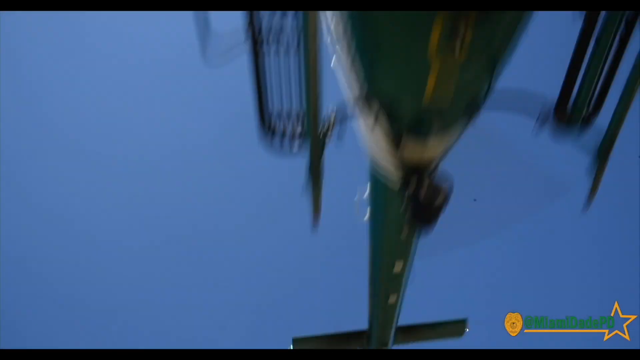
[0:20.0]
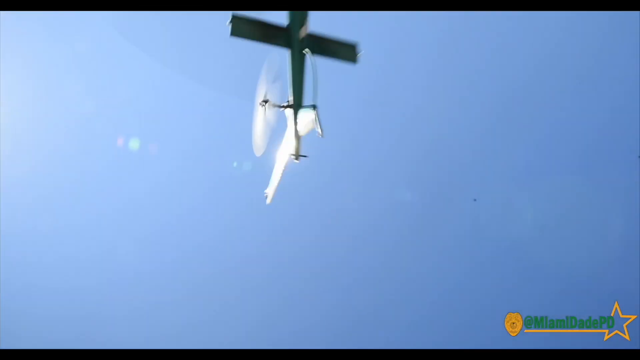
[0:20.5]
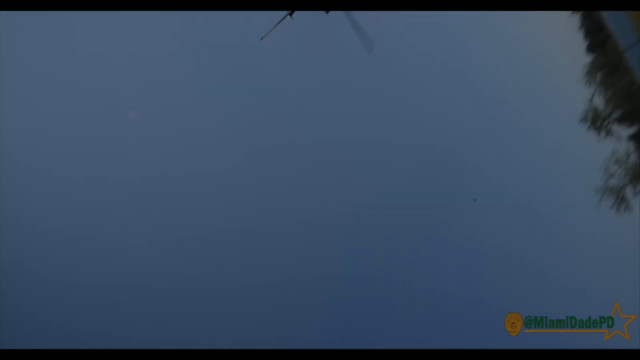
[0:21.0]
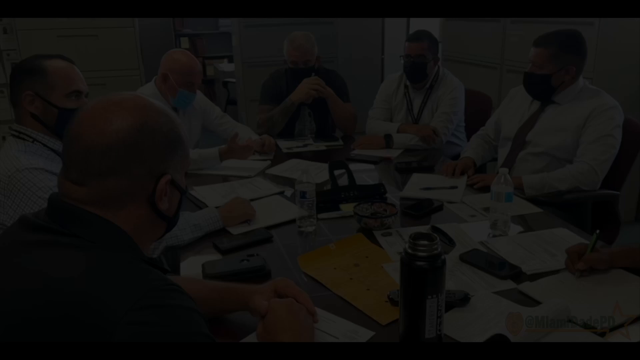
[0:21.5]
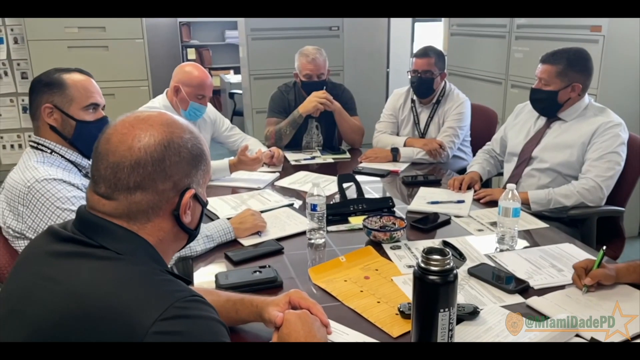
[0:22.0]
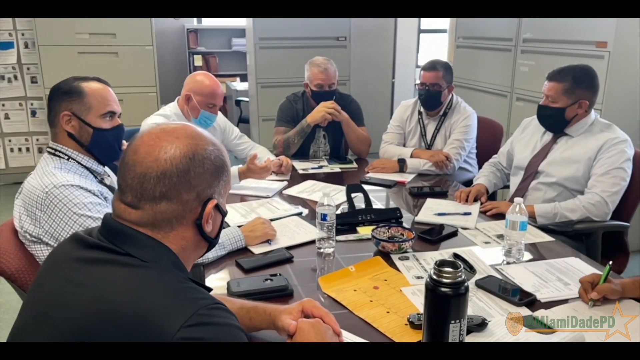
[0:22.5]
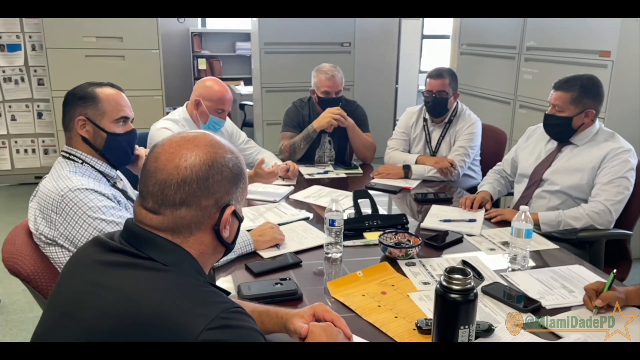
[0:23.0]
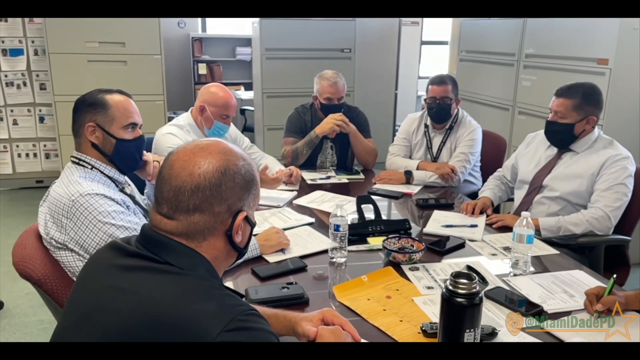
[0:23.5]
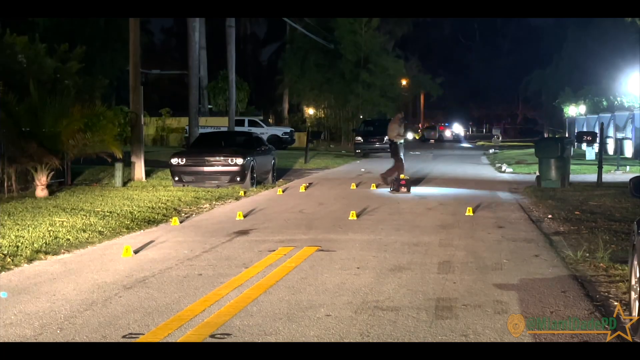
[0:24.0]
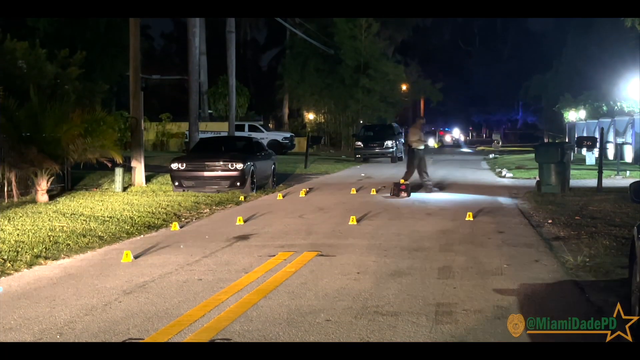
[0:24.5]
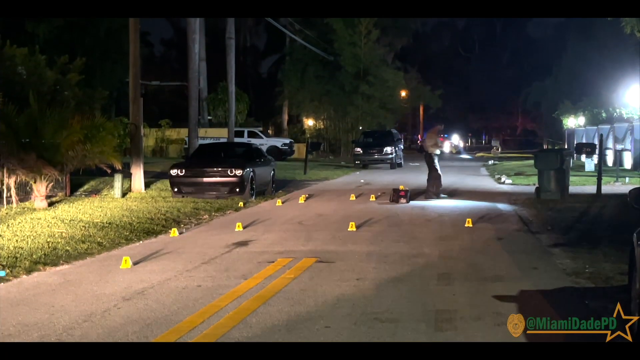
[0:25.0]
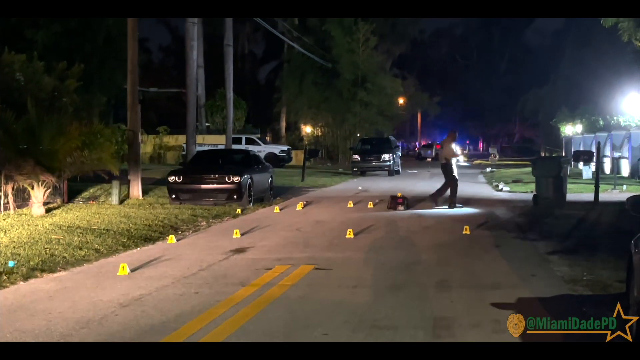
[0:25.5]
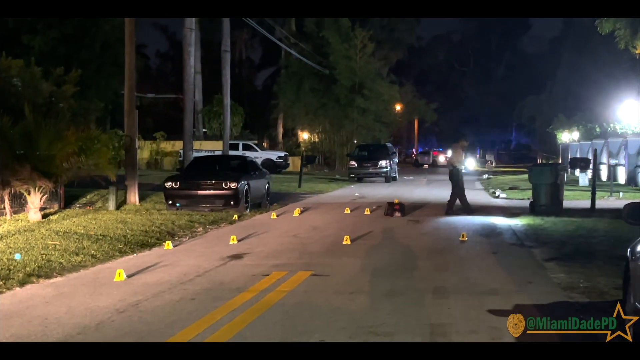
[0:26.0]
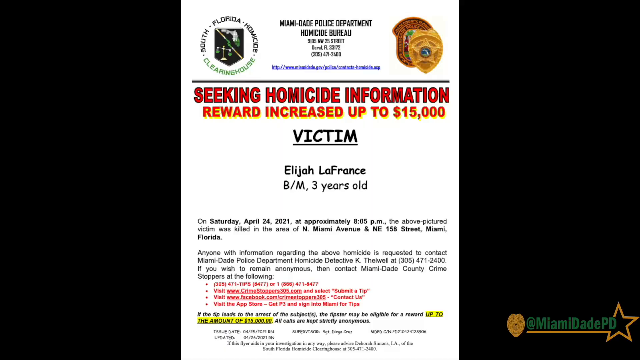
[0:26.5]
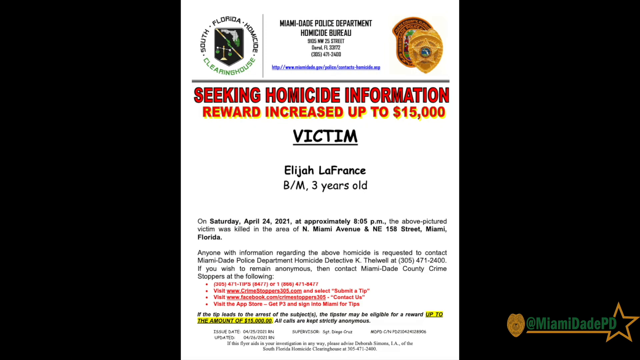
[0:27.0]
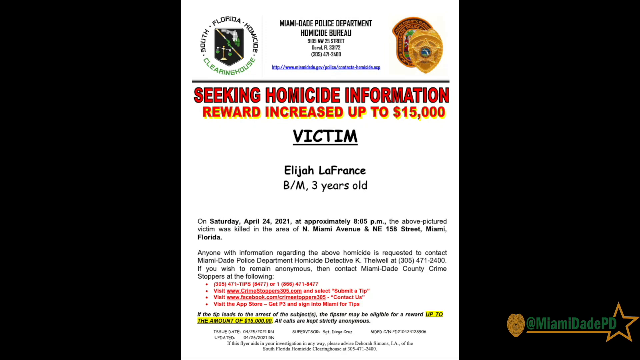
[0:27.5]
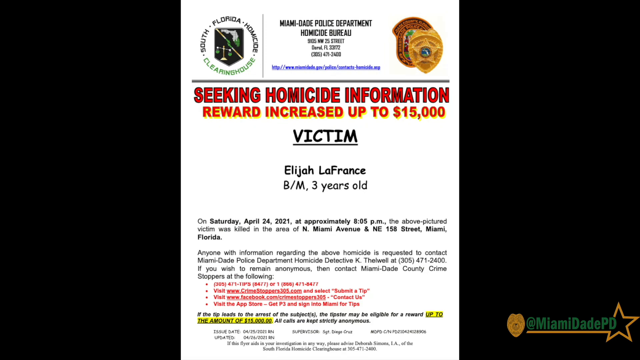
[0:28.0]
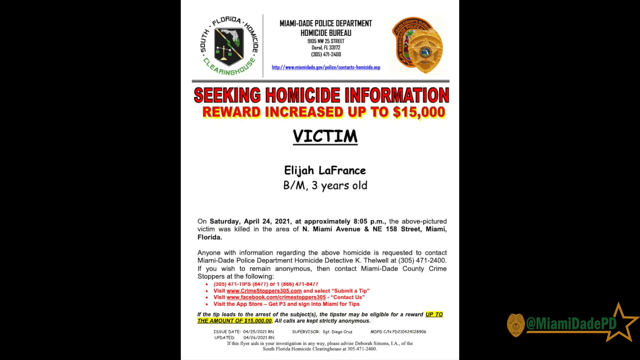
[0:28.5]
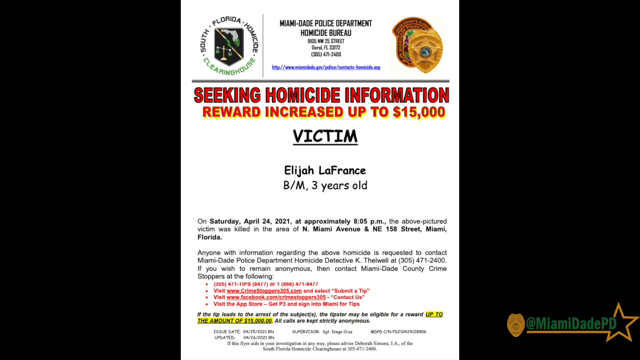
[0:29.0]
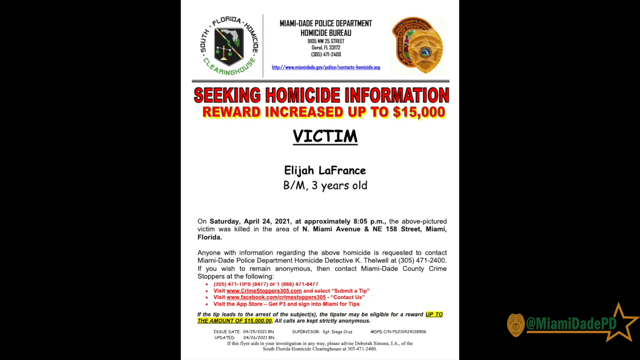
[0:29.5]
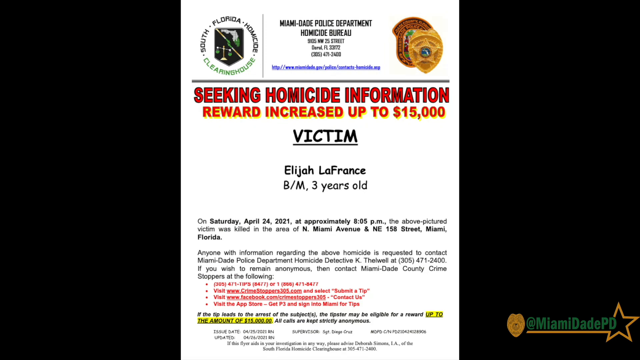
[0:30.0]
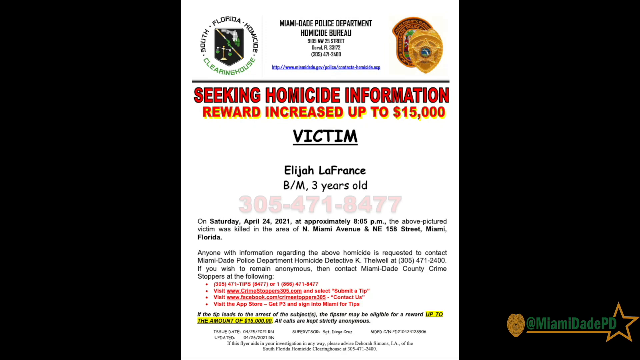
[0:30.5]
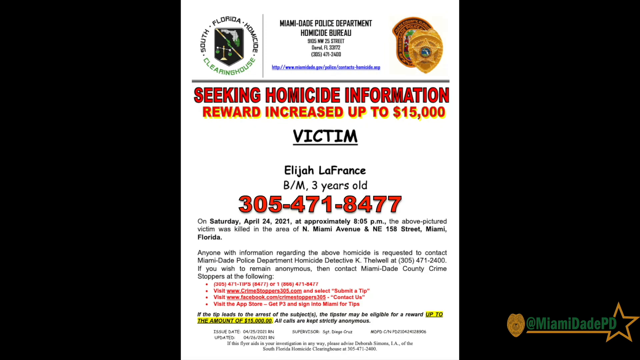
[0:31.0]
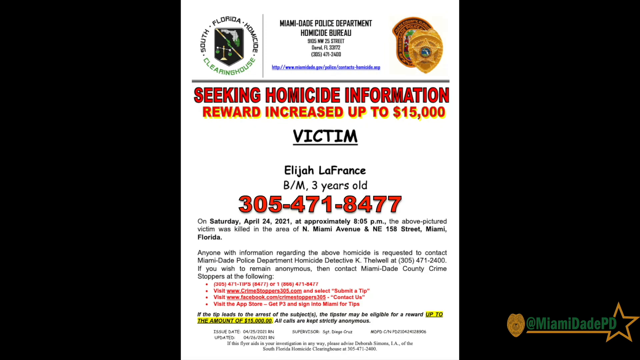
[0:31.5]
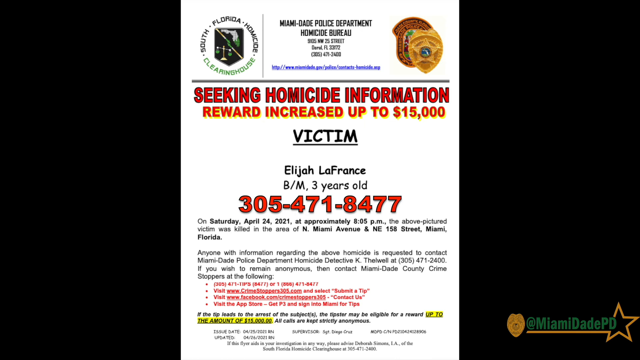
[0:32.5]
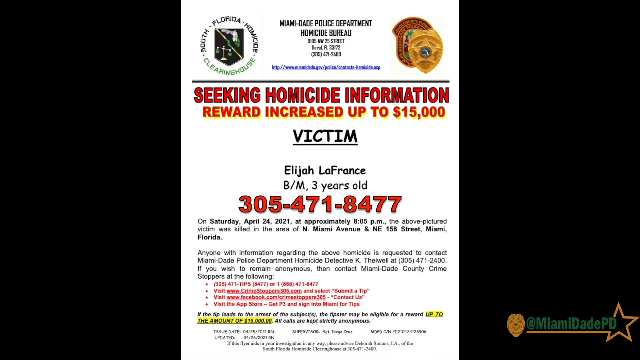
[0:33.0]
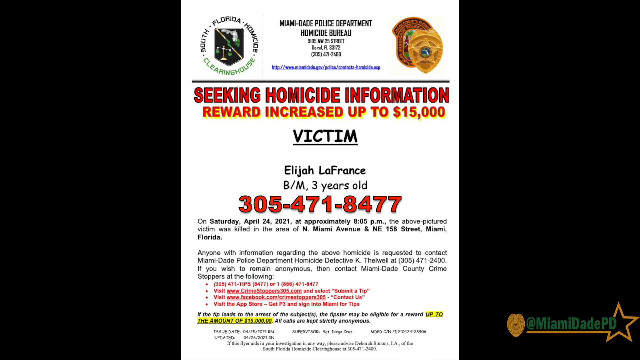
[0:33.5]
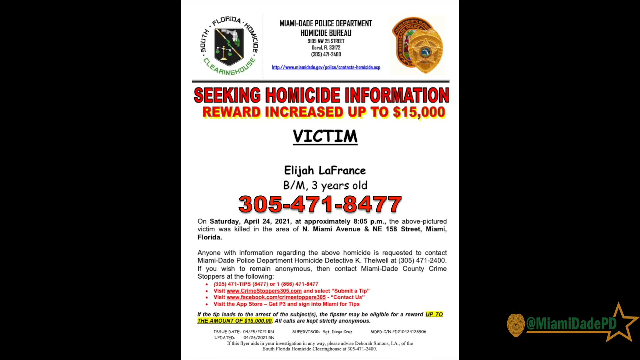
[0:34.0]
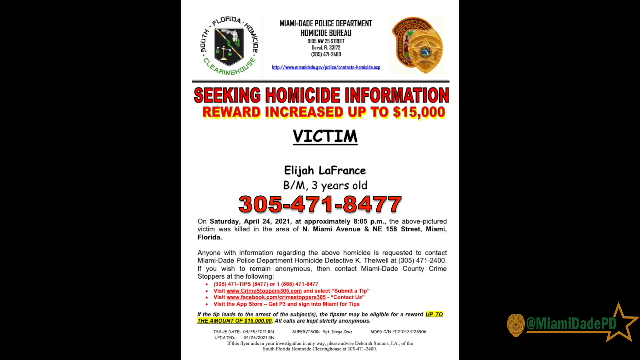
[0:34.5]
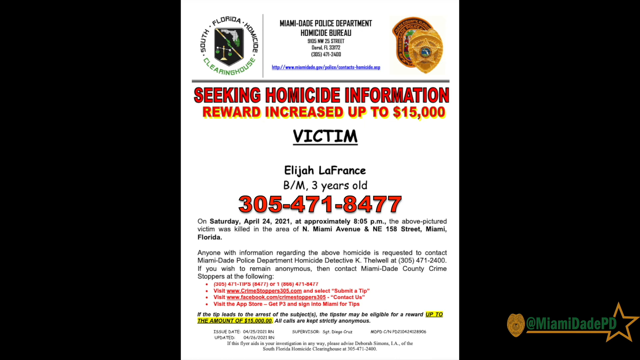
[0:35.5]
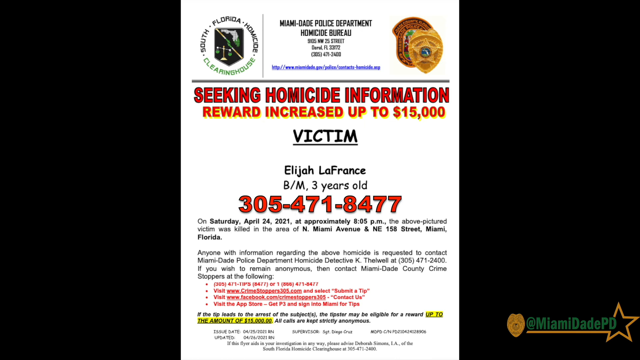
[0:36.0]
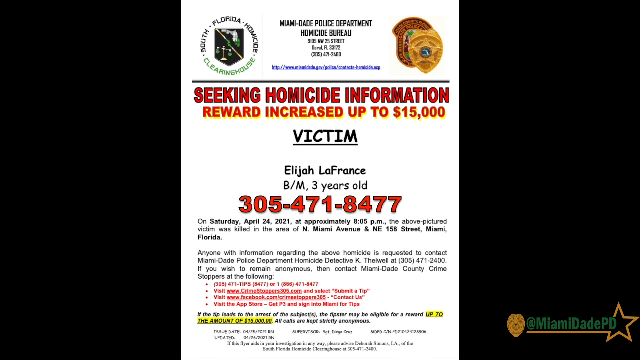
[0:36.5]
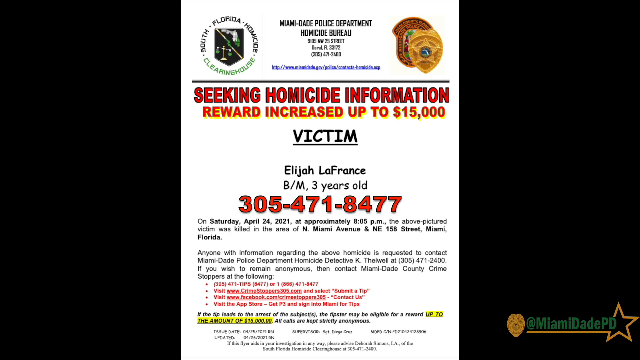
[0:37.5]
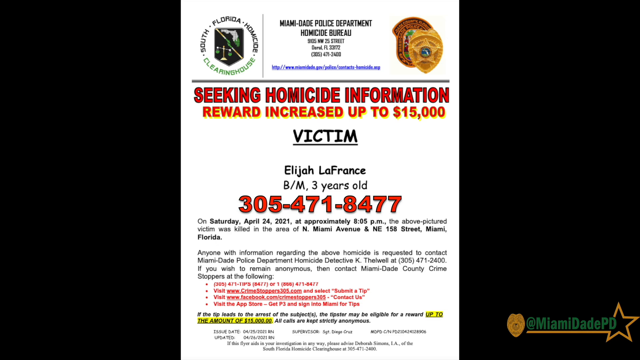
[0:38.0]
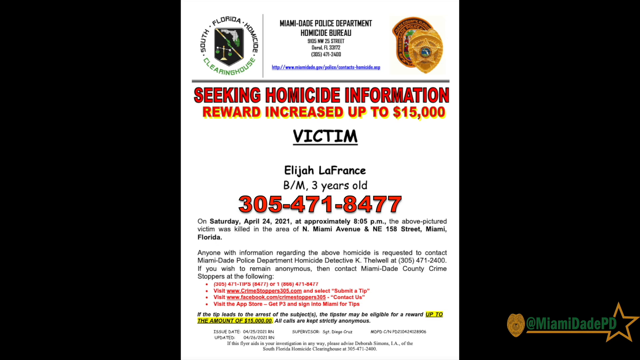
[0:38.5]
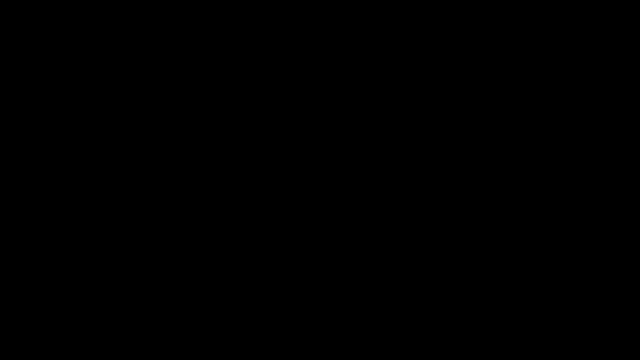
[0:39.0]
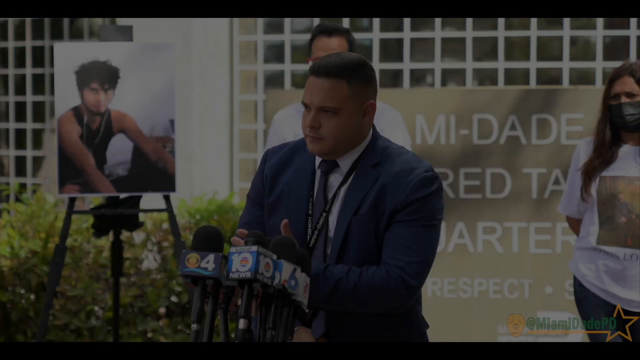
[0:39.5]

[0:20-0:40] The homicide notice continues: "Anyone with information regarding the above homicide is requested to contact Miami Dade Police Department Homicide Detective." It adds that those who wish to remain anonymous can contact Miami Dade County Crime.